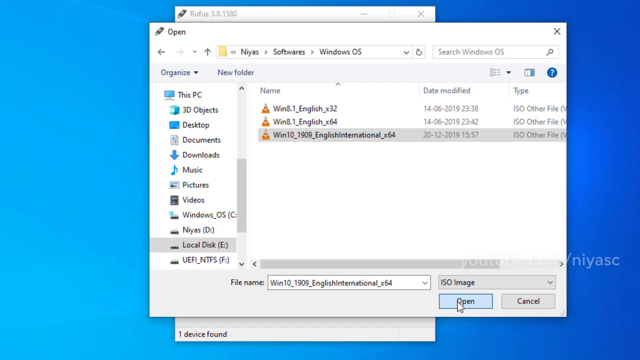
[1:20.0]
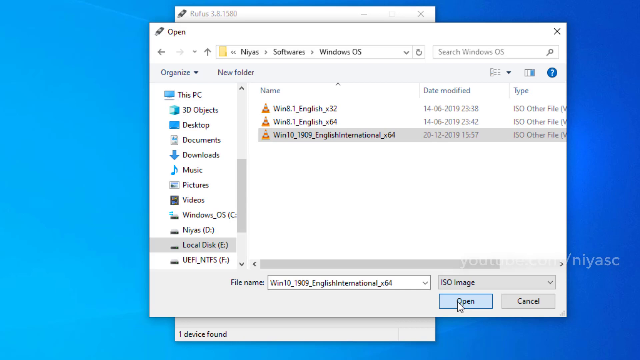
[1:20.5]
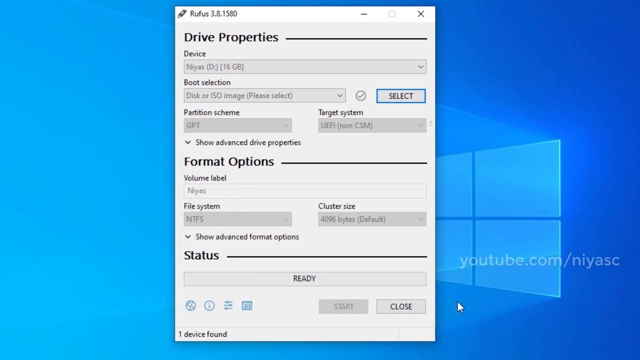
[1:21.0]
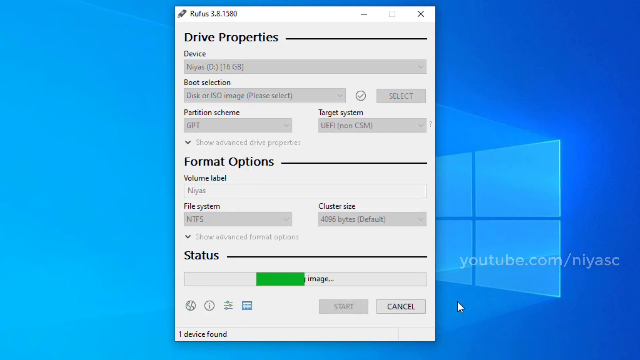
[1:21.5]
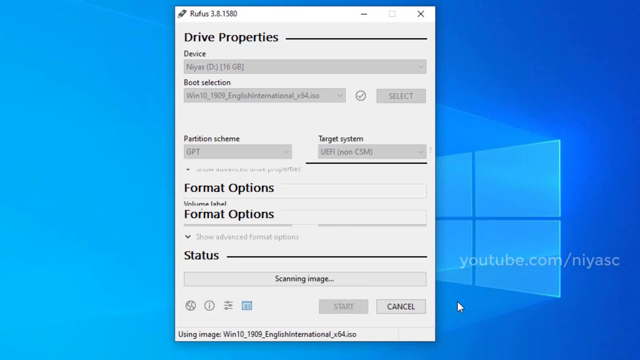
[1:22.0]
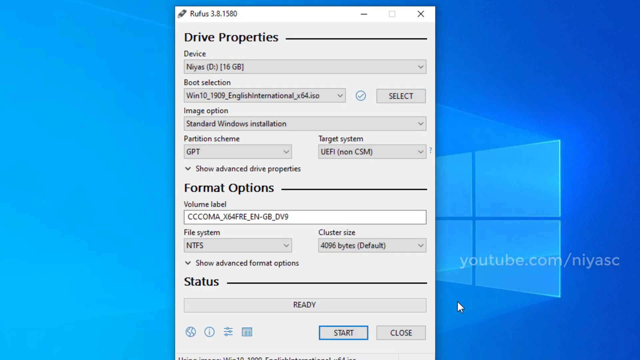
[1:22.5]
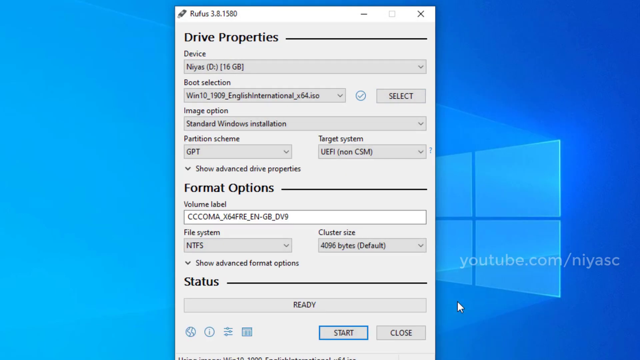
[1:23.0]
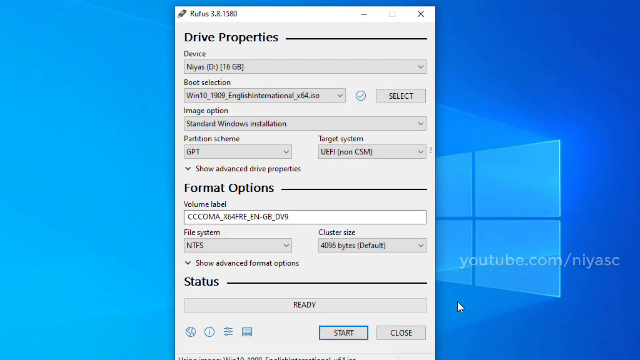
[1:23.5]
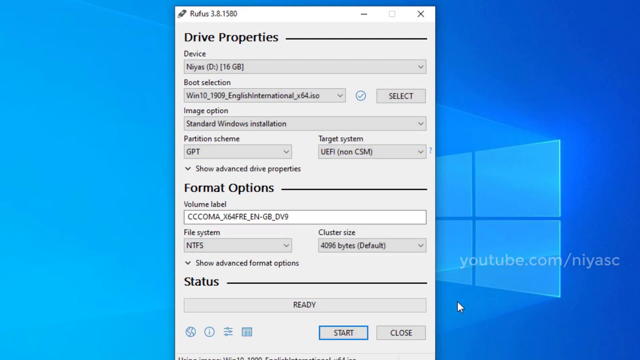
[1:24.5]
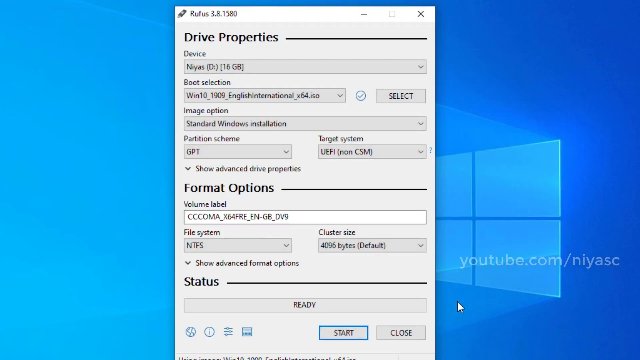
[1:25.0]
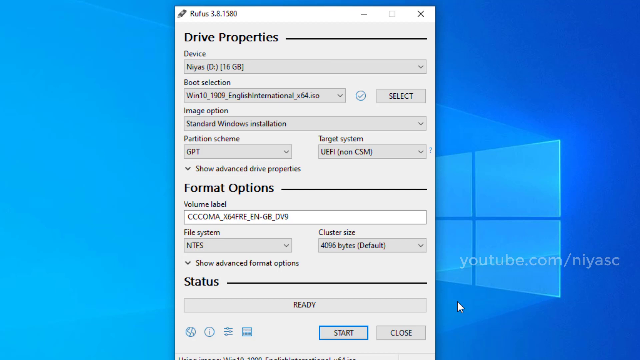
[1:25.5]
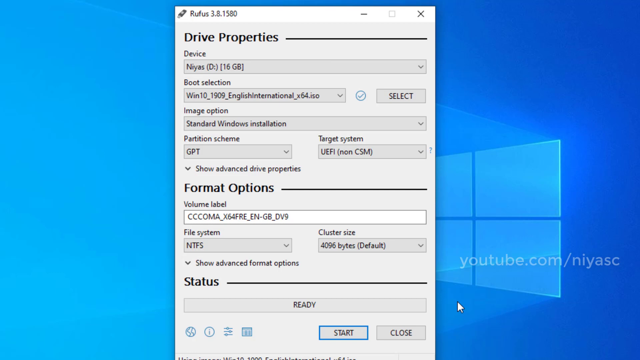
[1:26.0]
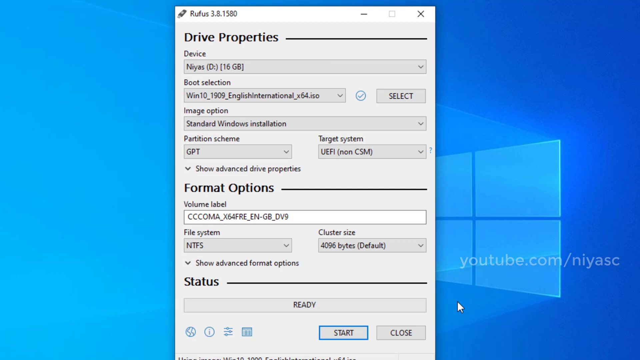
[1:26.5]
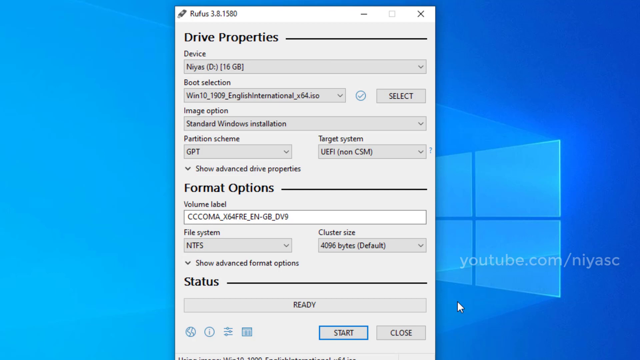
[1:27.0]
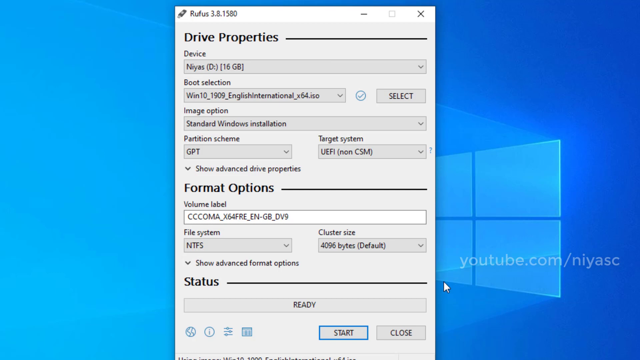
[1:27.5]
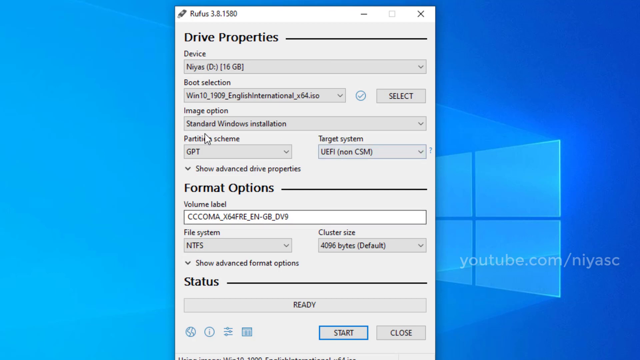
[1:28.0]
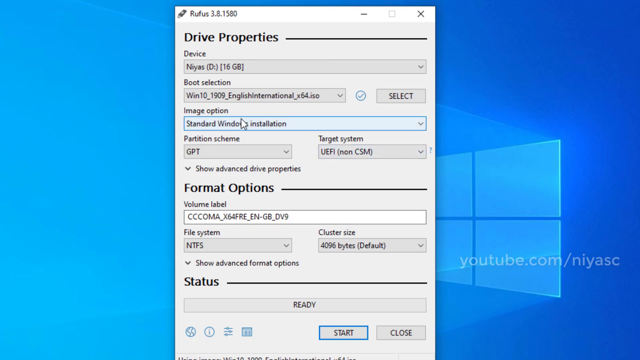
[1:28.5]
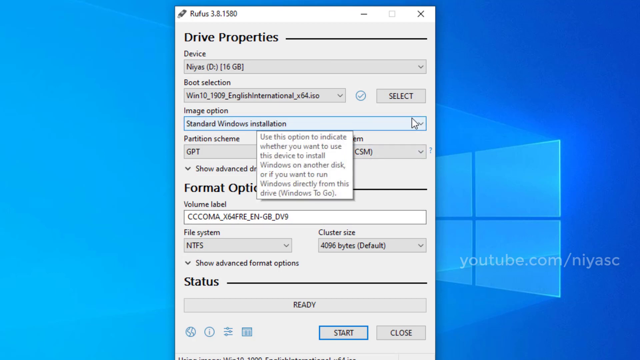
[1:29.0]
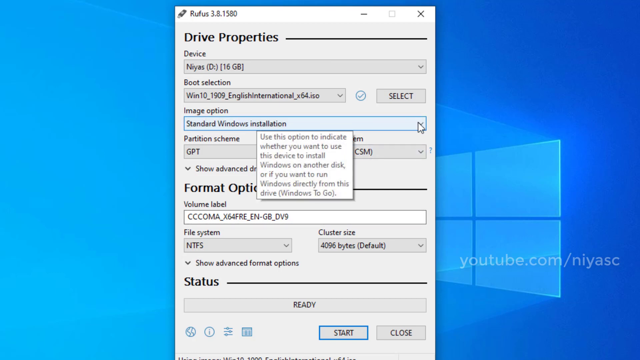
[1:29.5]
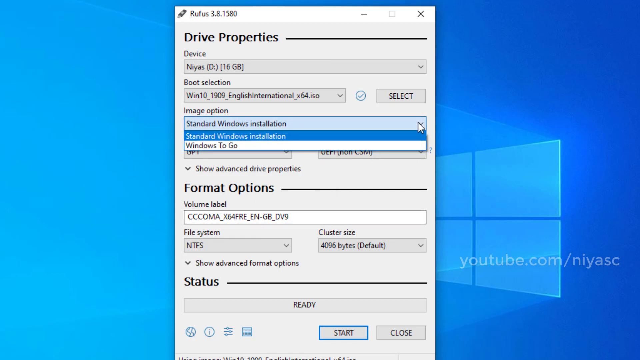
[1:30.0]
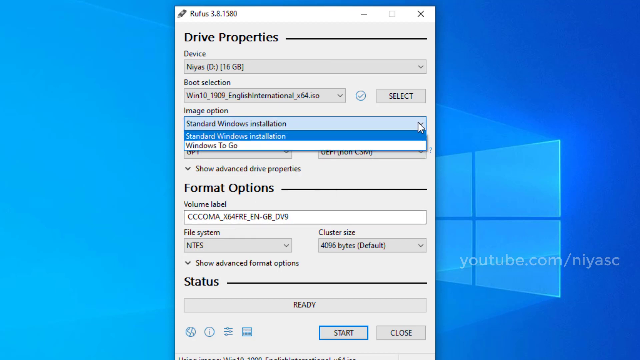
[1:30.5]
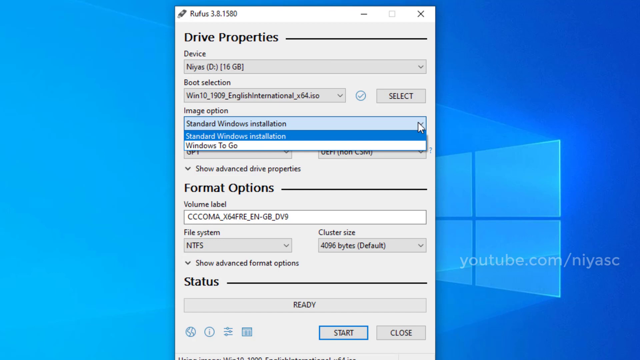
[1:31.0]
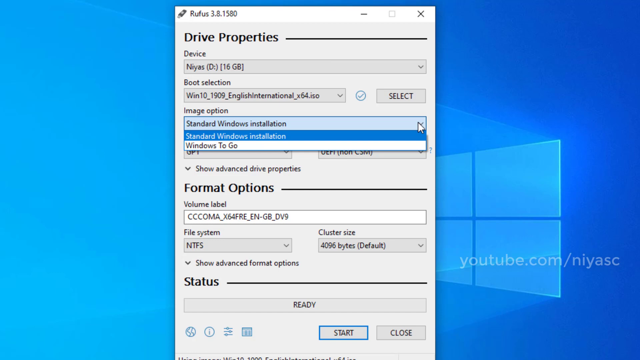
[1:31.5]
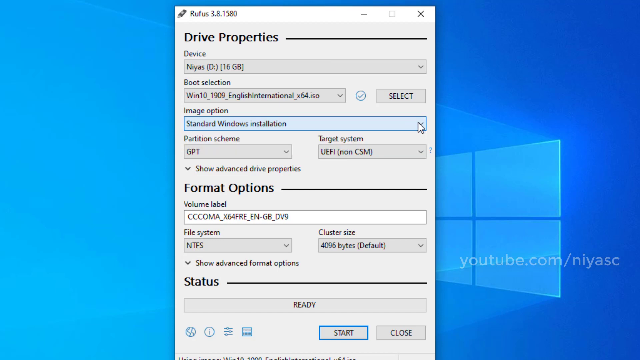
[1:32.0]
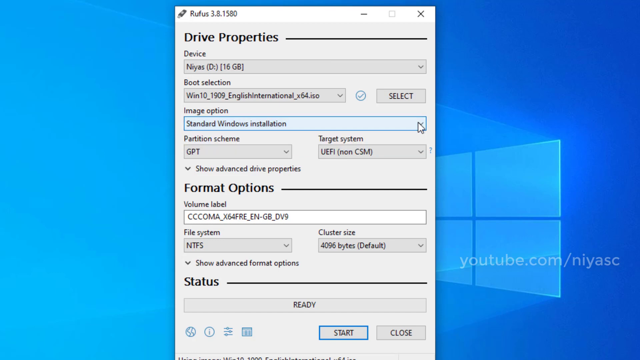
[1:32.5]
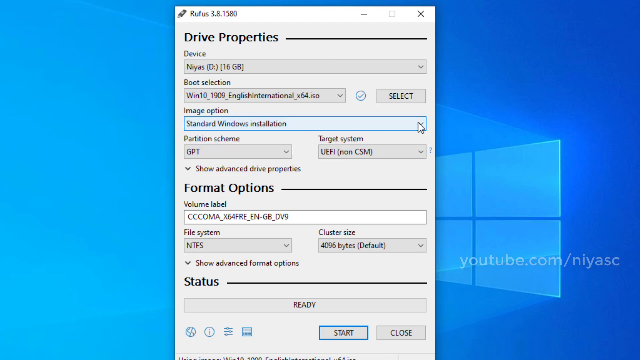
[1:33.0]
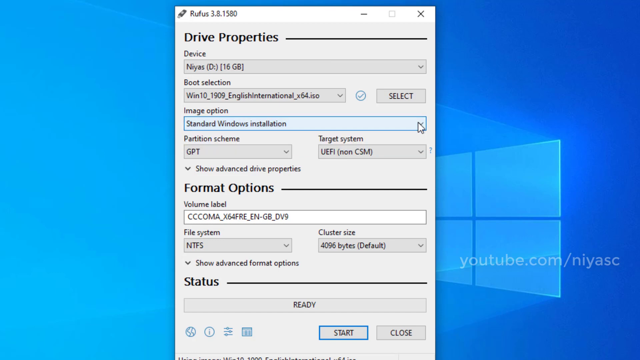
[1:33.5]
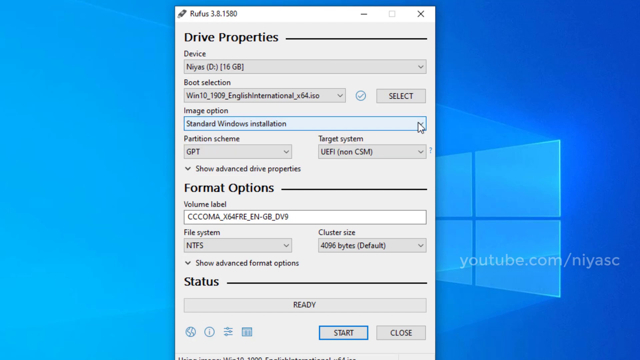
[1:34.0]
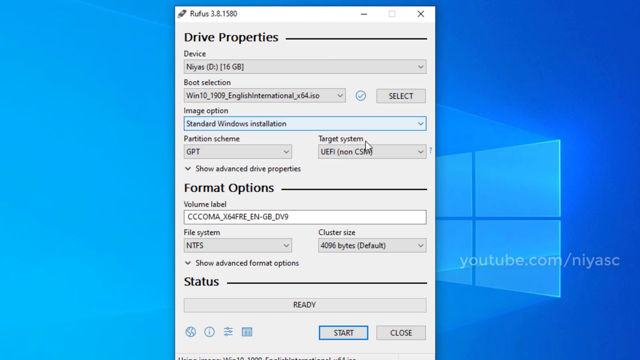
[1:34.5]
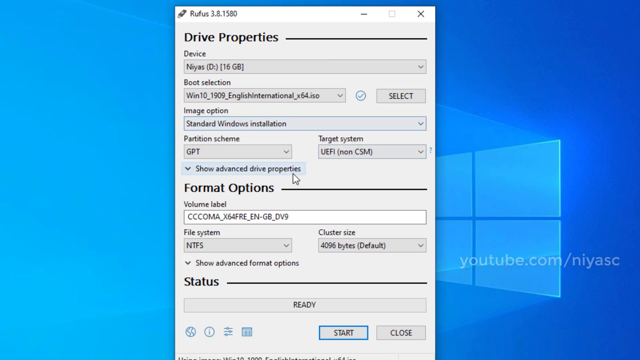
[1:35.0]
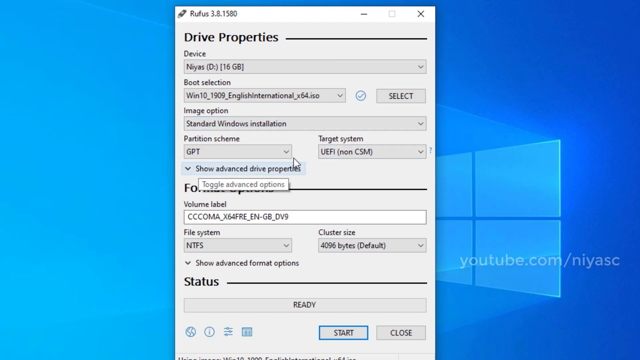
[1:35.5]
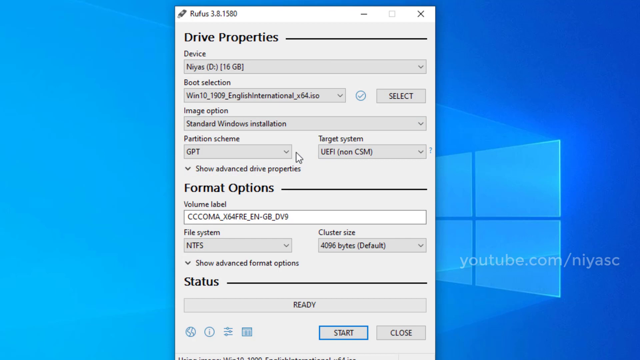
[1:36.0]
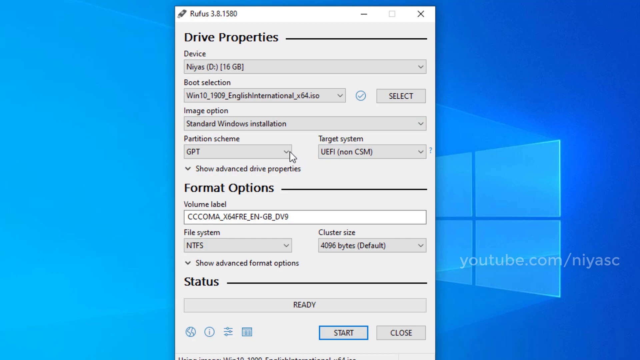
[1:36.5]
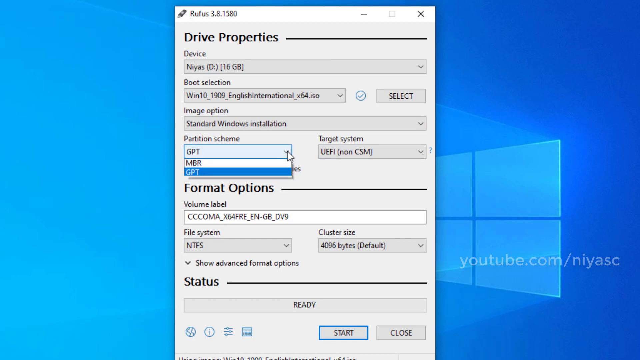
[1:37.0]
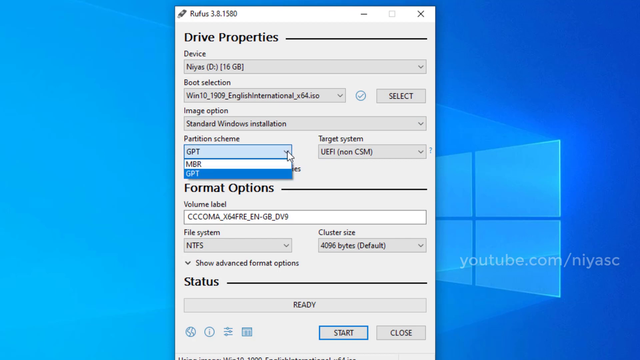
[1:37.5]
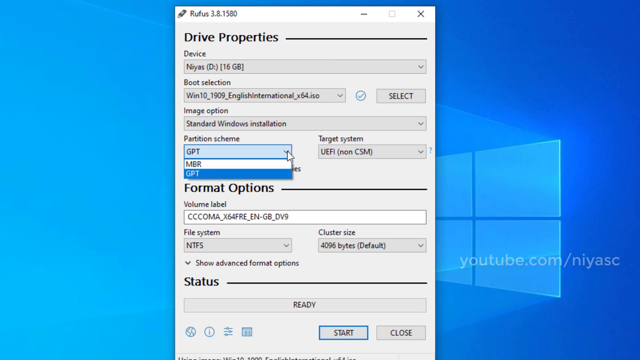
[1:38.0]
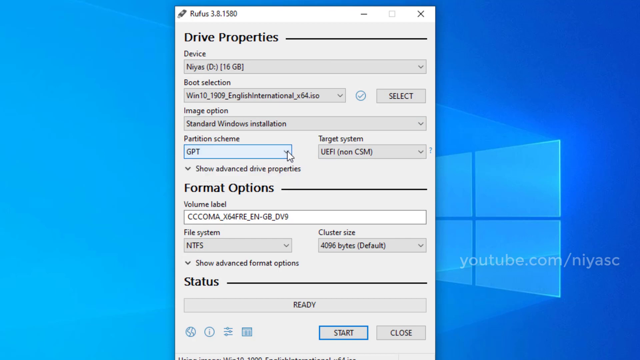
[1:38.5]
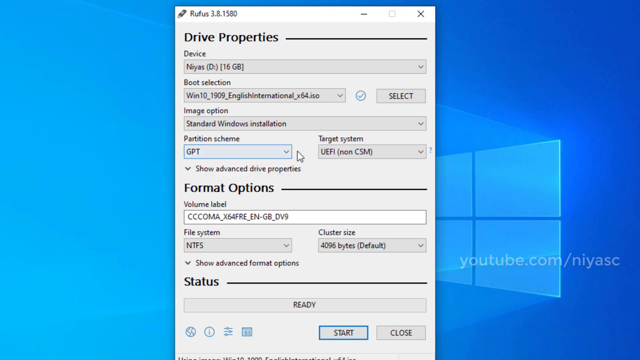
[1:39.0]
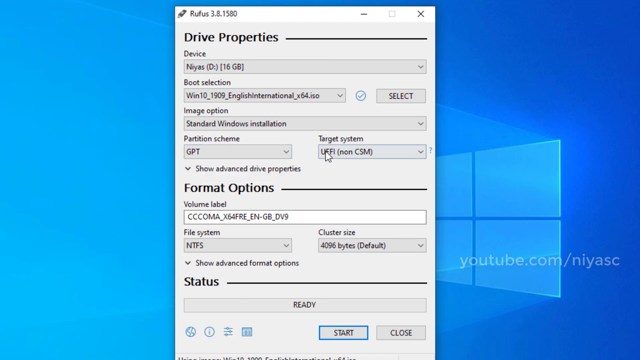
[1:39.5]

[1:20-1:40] After the user selects the bottom file and clicks open, the line underneath status at the bottom changes to "scanning image" with a green bar going through it. When that finishes, a new option called "image option" appears toward the top, between boot selection and partition scheme, currently set to "standard Windows installation" and with a drop-down arrow. The user moves the cursor out of the window to the bottom right of the screen, moves it back, hovers over the image option section and clicks the drop-down arrow. There are two options: the current one and "Windows to go" below it. The user continues with standard Windows installation. On the left, under Partition Scheme, there are GPT and MBR, currently set to GPT. The drop-down for Target System is briefly shown.